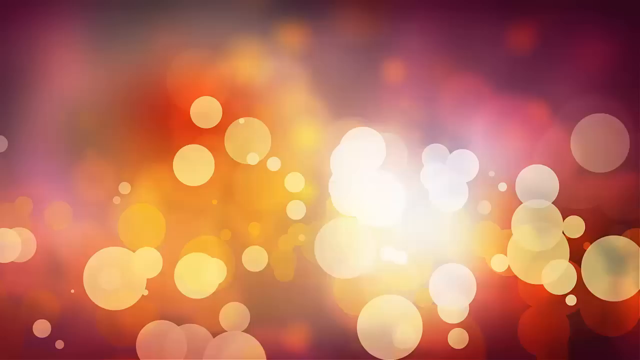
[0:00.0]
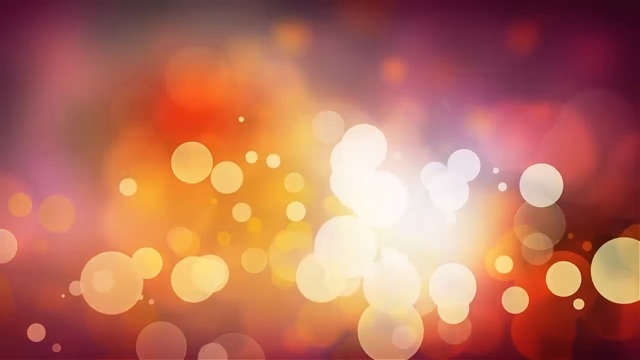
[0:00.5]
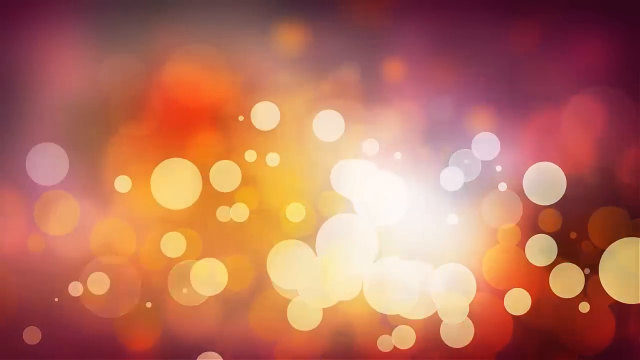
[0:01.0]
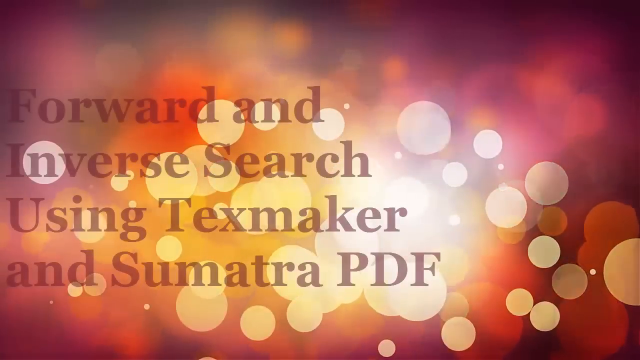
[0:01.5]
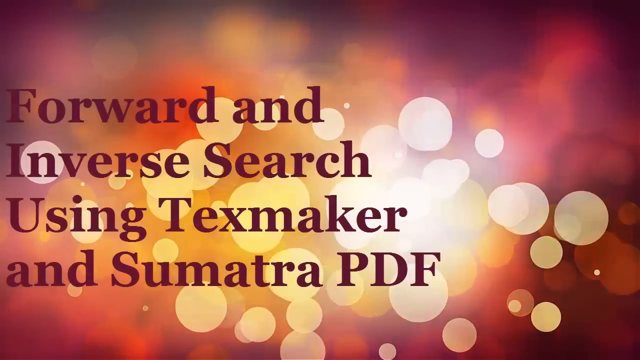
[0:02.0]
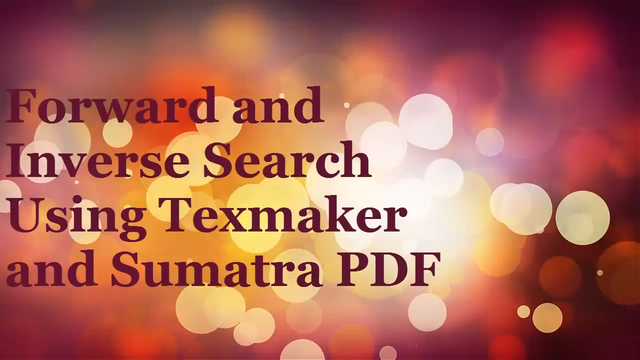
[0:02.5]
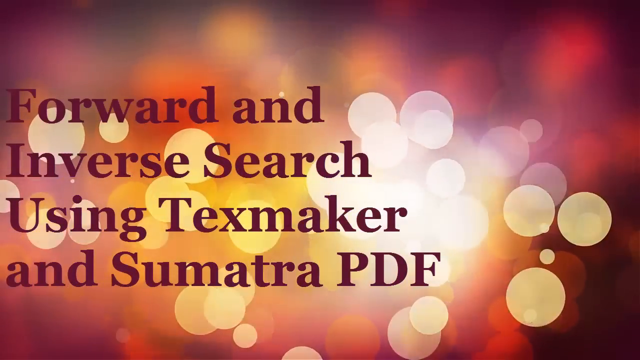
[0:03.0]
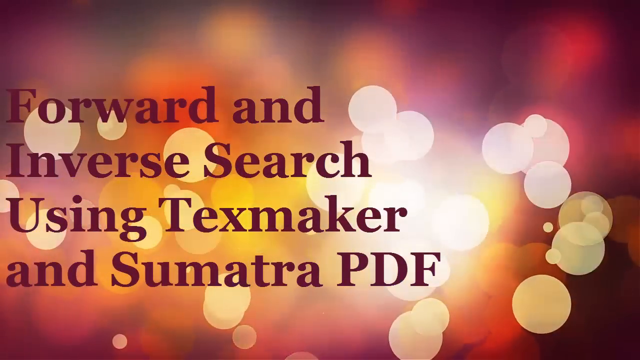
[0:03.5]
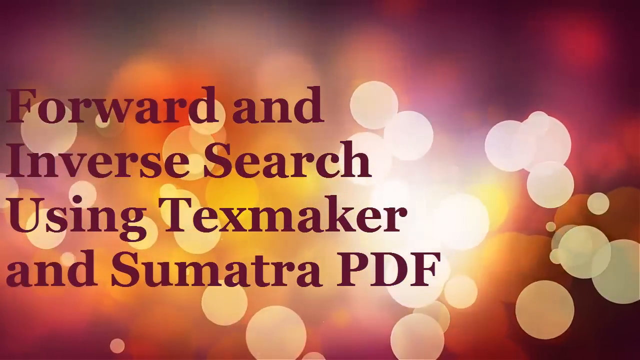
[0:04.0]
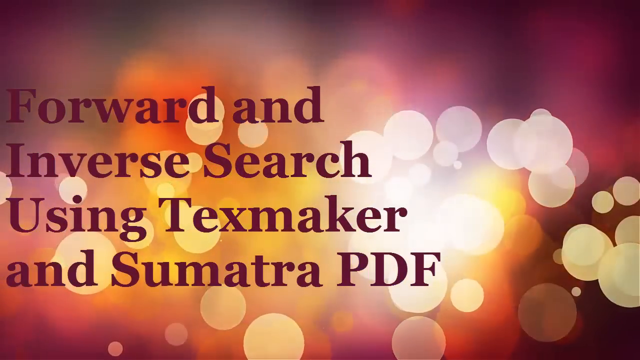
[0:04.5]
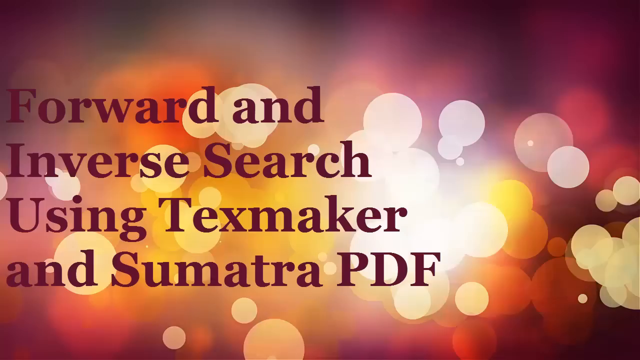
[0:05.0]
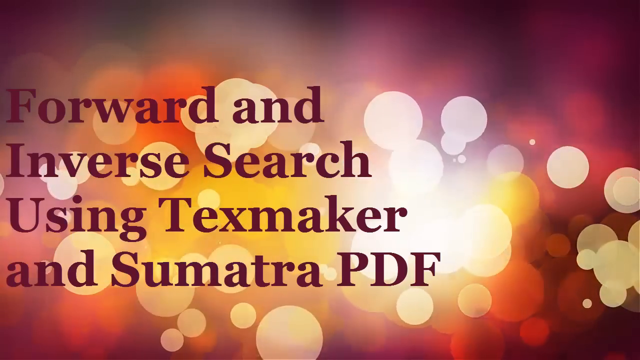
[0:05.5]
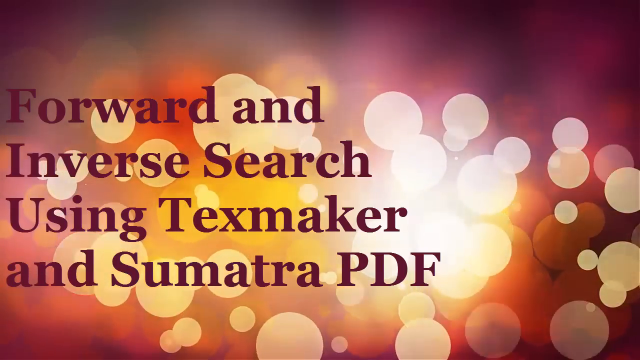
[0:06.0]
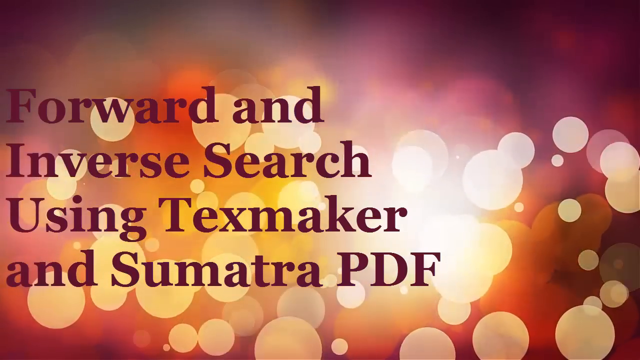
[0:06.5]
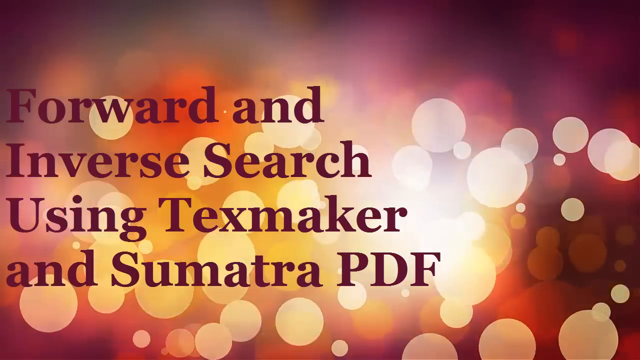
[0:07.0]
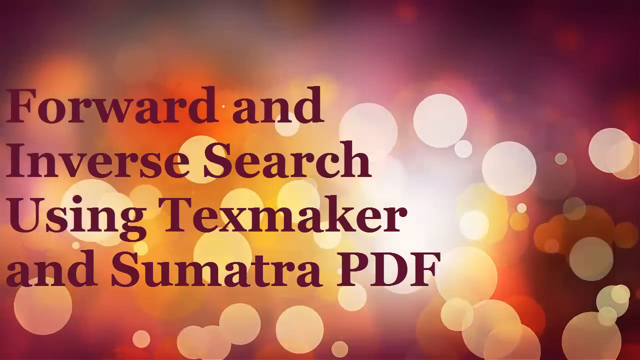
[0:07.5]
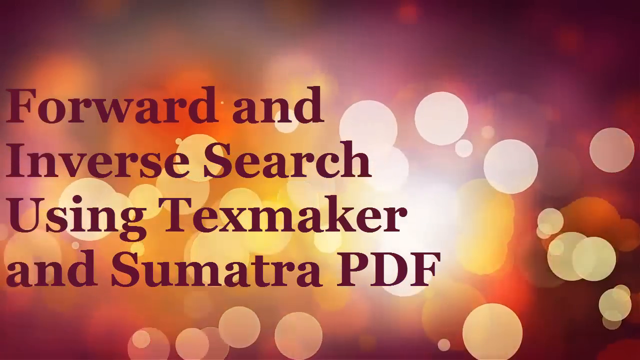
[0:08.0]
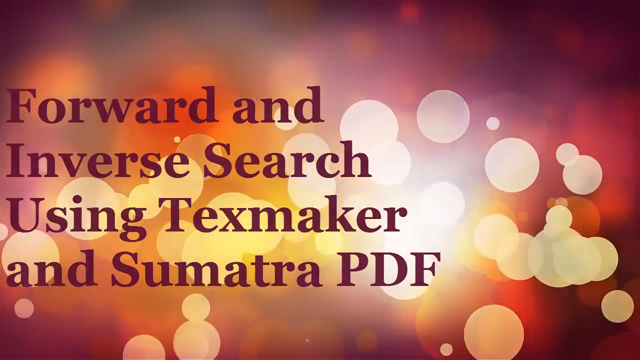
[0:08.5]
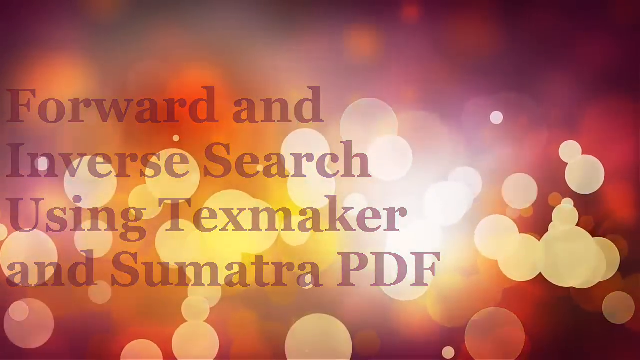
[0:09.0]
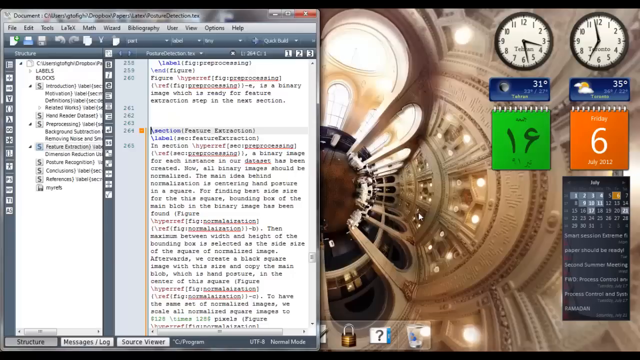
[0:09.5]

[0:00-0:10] What looks like a presentation opens with the title "forward and inverse search using TextMaker and Sumatra PDFs". Visual editing effects pop up in the background, and then a lot of technical material appears. The last screen shows a recording of someone's desktop, apparently Mac or Linux, with widgets showing different clocks, different weather, different times and some calendars. On screen, what looks like code is open in a text editor, possibly Notepad++.